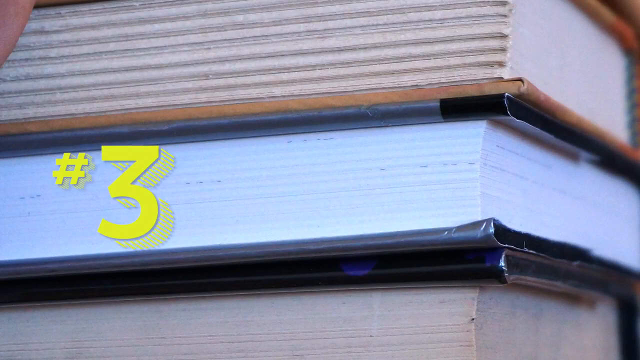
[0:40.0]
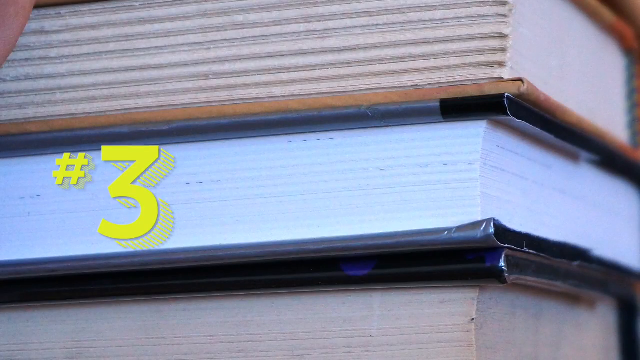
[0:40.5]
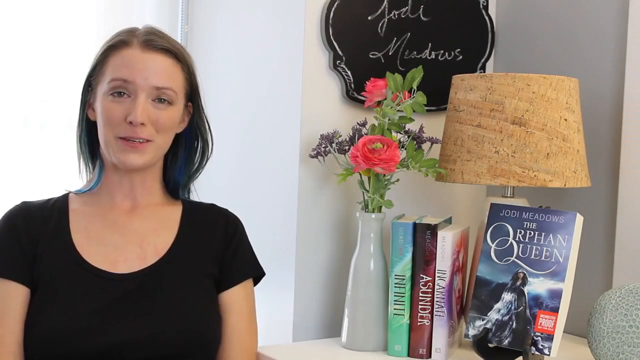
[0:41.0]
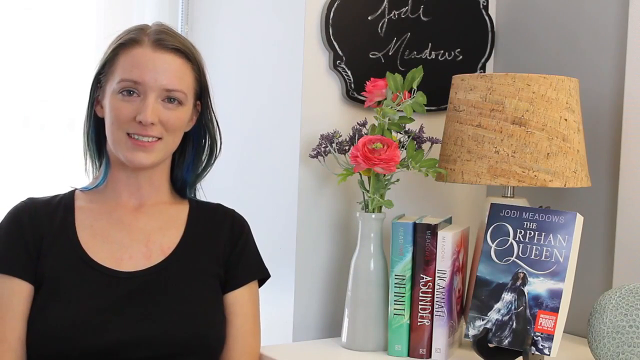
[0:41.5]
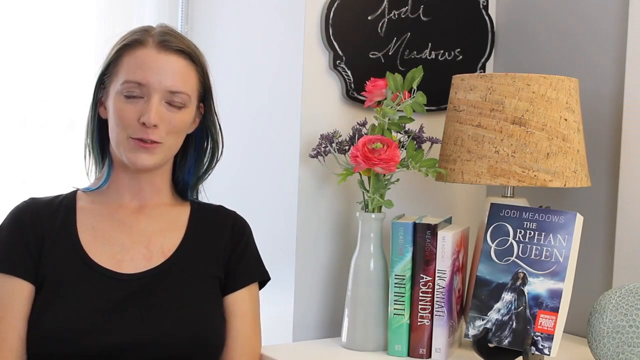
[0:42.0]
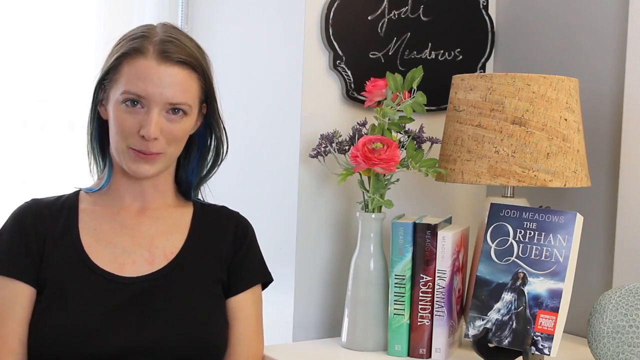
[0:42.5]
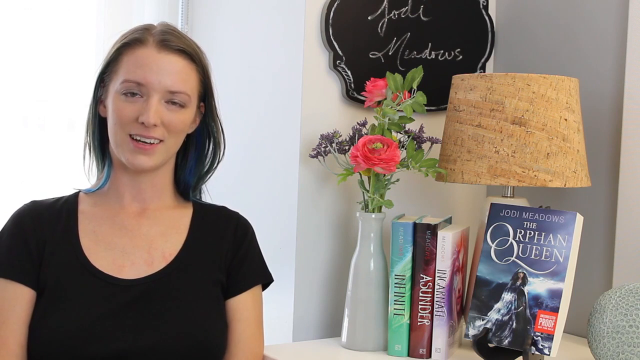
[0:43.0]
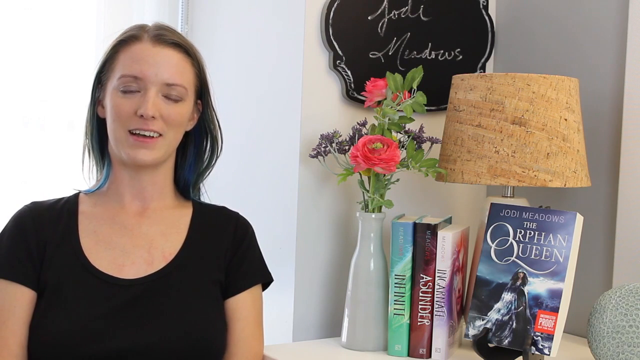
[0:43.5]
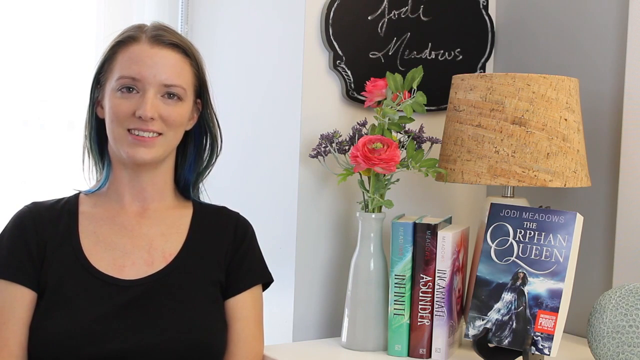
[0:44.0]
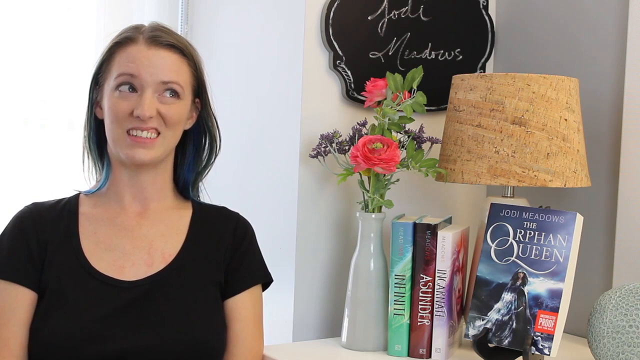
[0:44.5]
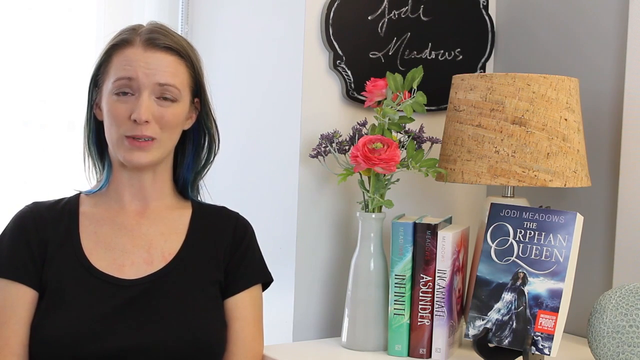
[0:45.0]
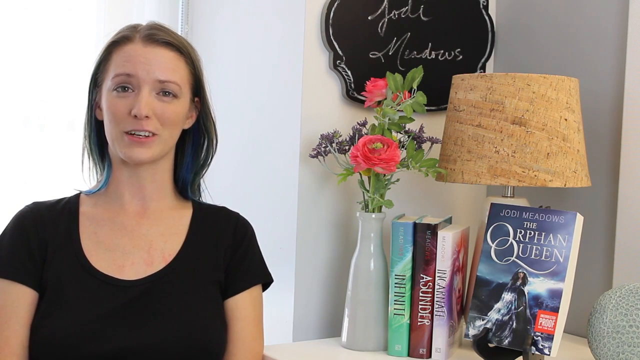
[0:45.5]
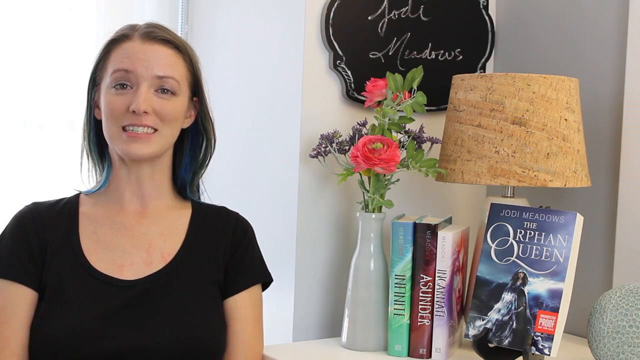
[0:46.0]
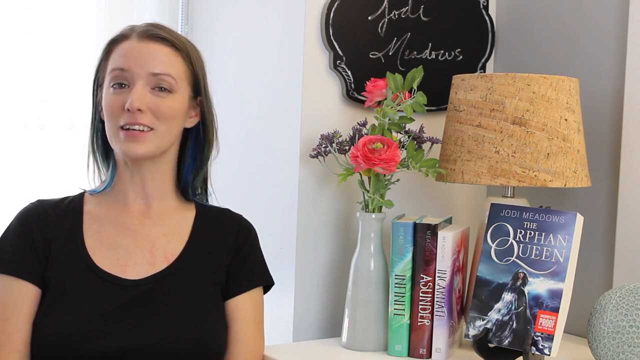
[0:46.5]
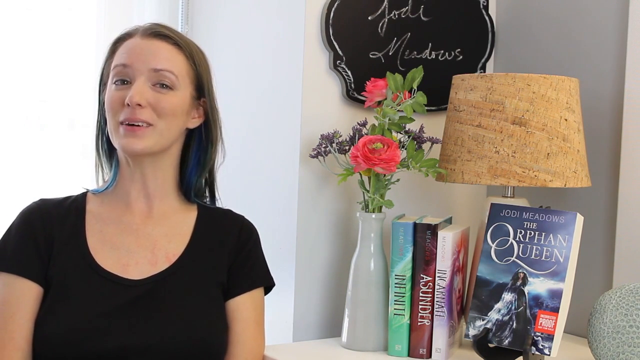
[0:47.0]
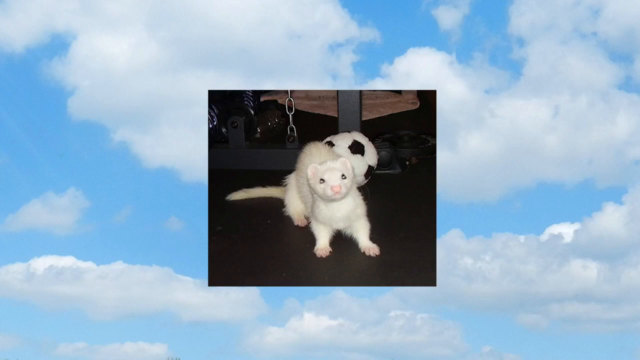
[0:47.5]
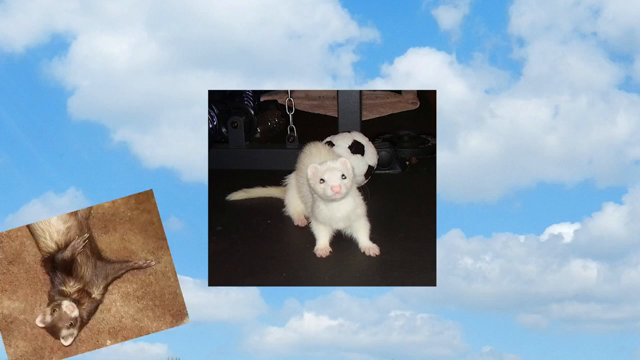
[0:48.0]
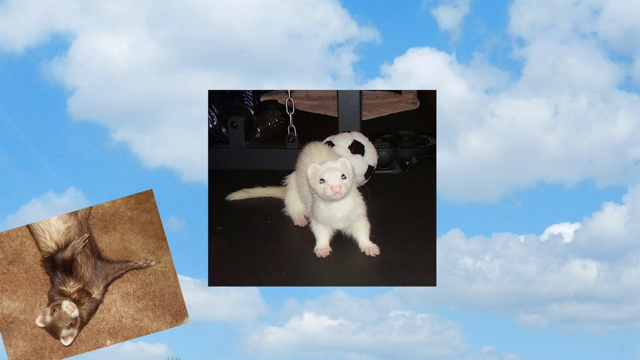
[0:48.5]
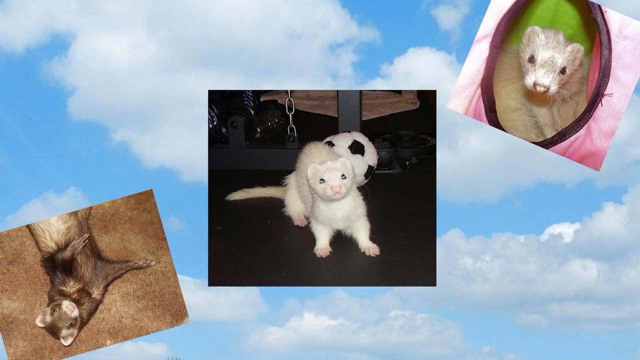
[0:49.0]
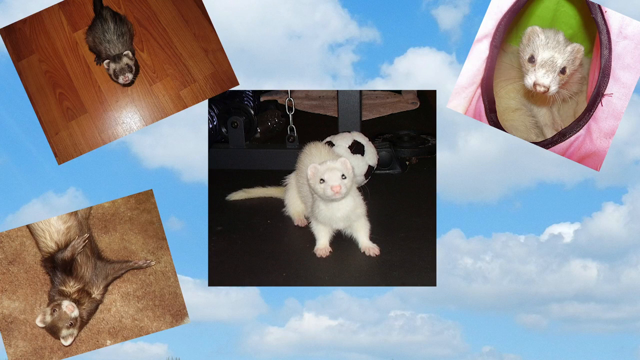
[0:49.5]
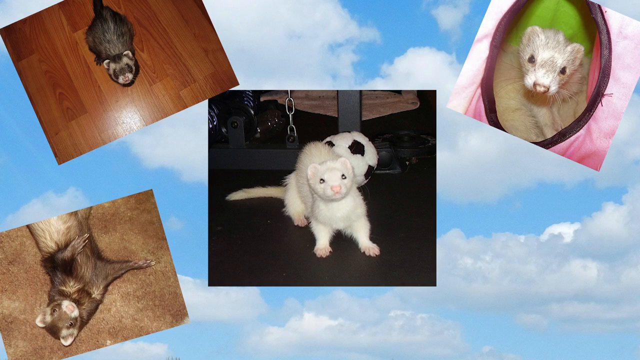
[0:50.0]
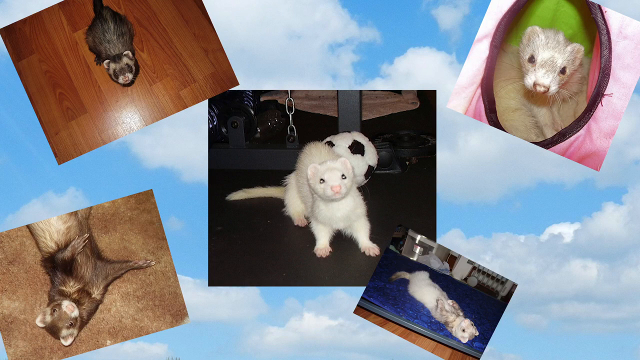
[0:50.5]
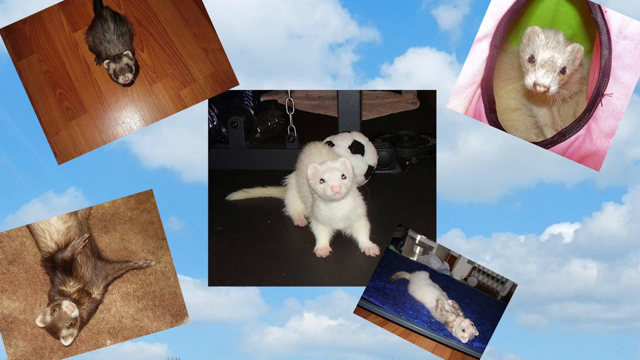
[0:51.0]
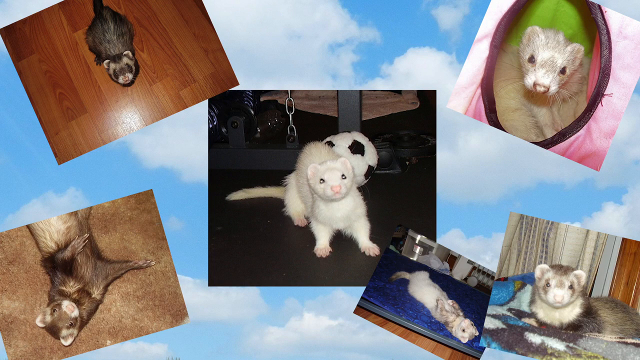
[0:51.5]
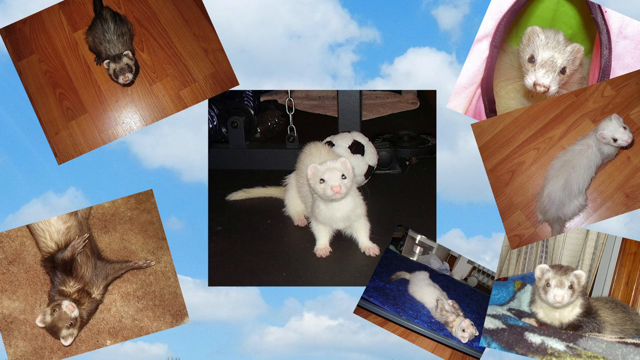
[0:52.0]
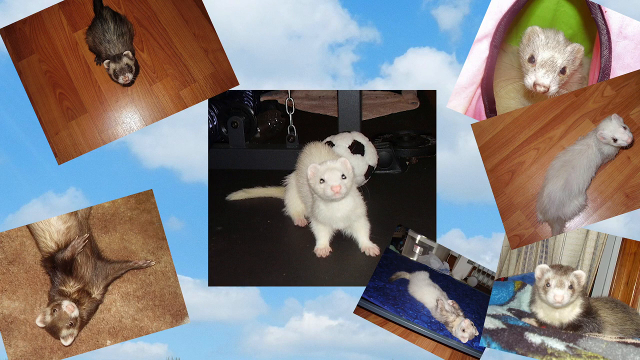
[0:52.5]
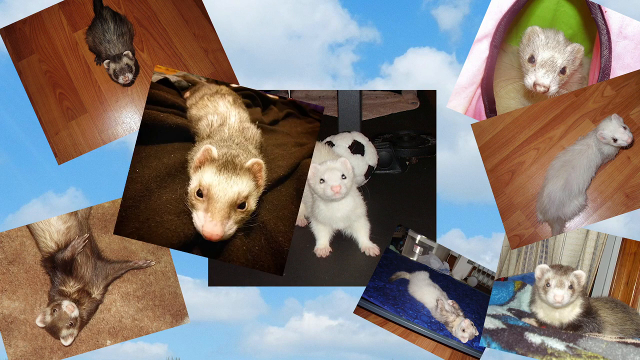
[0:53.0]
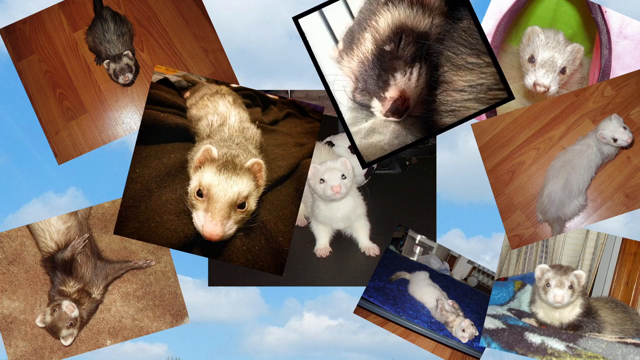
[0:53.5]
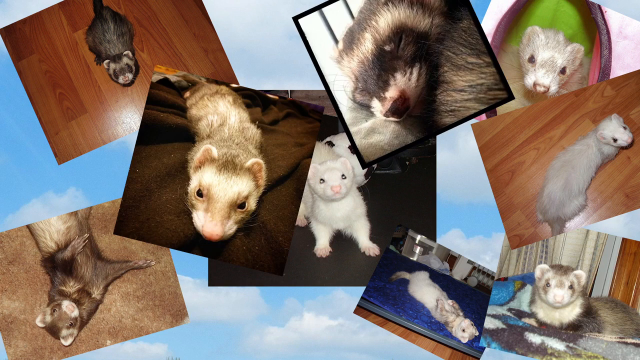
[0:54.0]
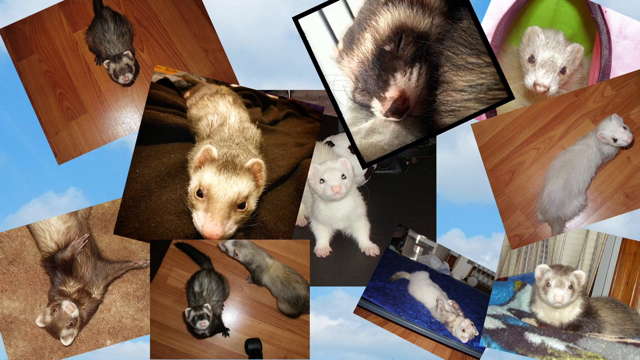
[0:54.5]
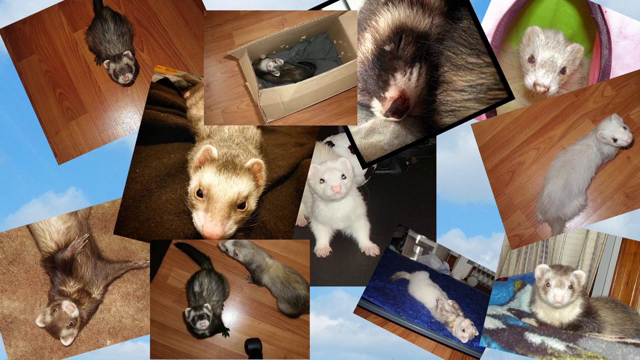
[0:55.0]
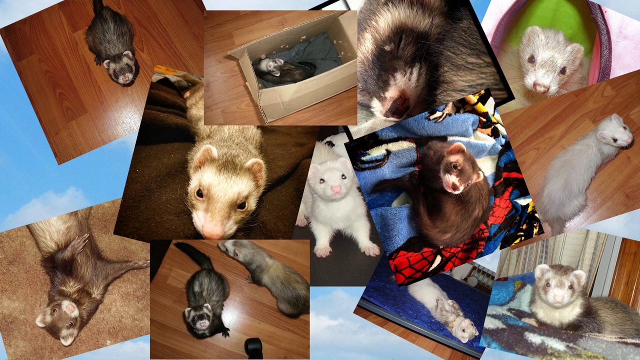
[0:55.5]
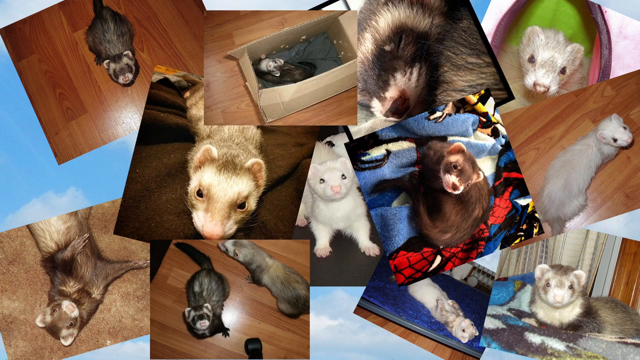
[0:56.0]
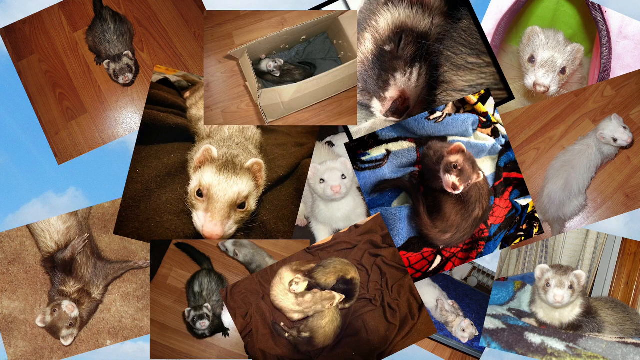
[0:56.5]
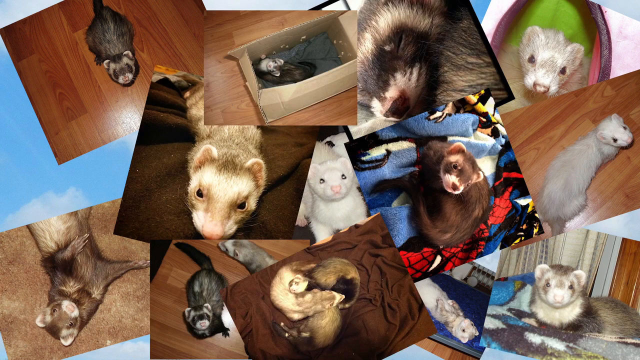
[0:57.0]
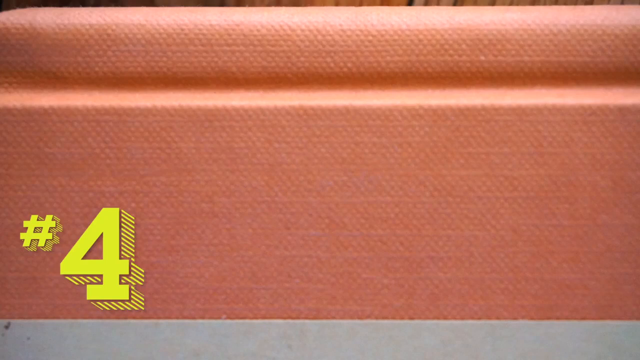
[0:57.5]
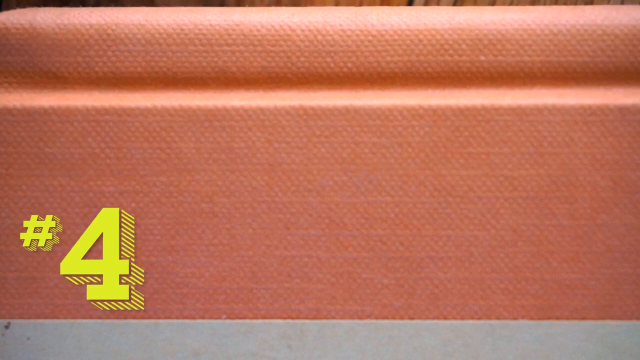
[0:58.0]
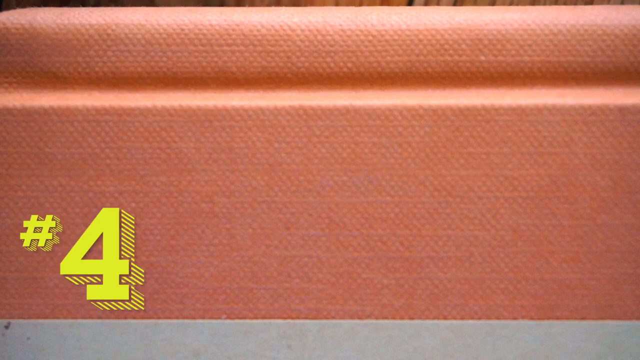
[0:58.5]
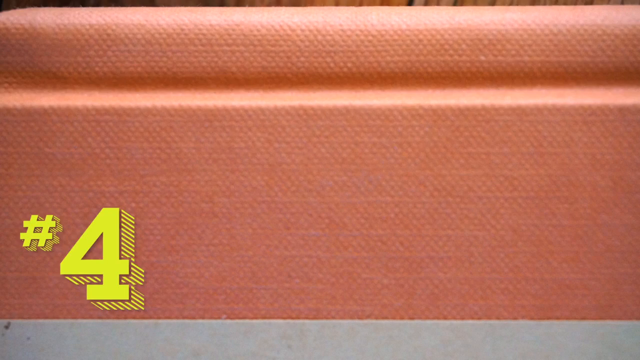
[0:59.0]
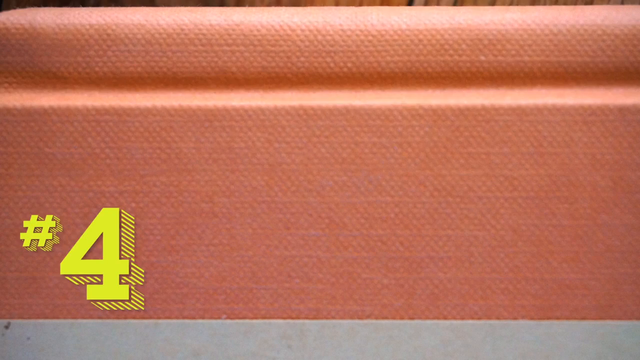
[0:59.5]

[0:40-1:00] A static image of books stacked on top of each other is shown, with the number 3 in yellow text superimposed over it. The video cuts to a woman sitting by a bookshelf. She wears a short-sleeved black shirt and has long brown hair and brown eyes. A small blackboard hangs on the wall above the bookshelf, with the name "Jody Meadows" written on it in white chalk. The bookshelf has a small lamp and a vase with pink flowers, and a book titled The Orphan Queen by Jody Meadows faces forward on it. The woman continues to talk, and then the video cuts to a static image of a white ferret next to a soccer ball. Several other images of ferrets appear on the screen, each a different color and in a different location. A close-up image of the spine of a book appears, with the number 4 superimposed over it.